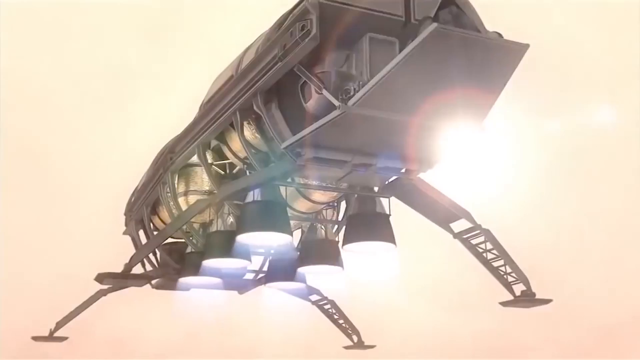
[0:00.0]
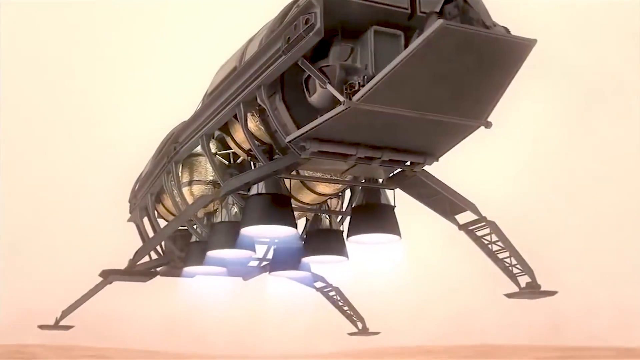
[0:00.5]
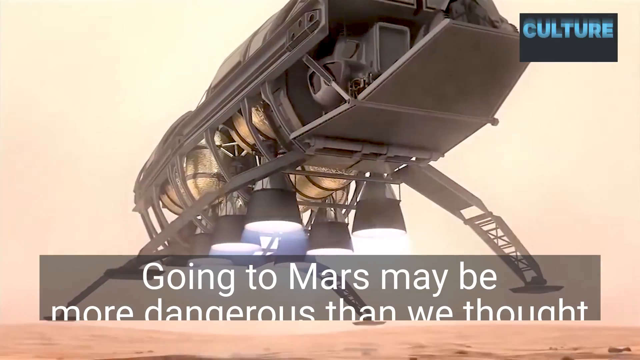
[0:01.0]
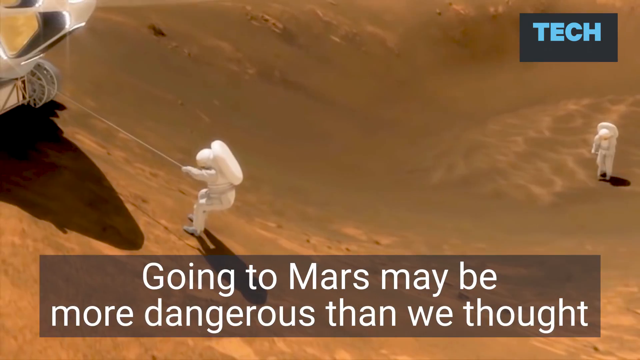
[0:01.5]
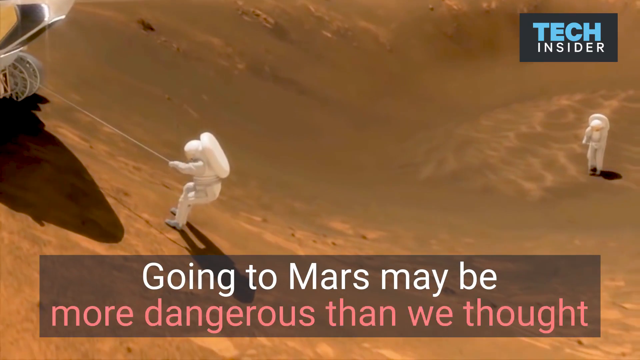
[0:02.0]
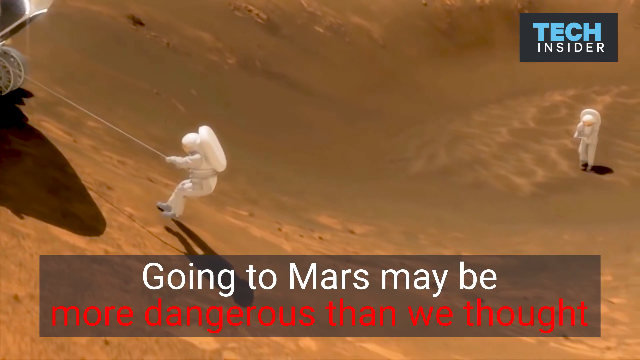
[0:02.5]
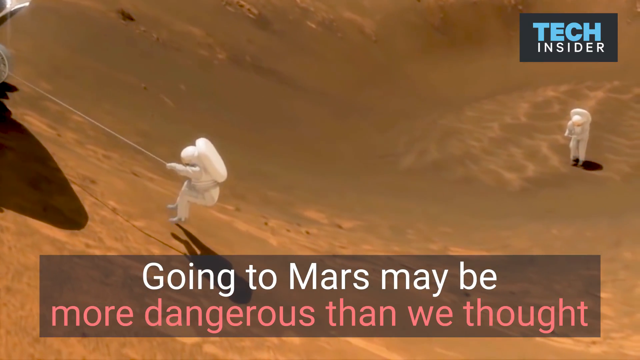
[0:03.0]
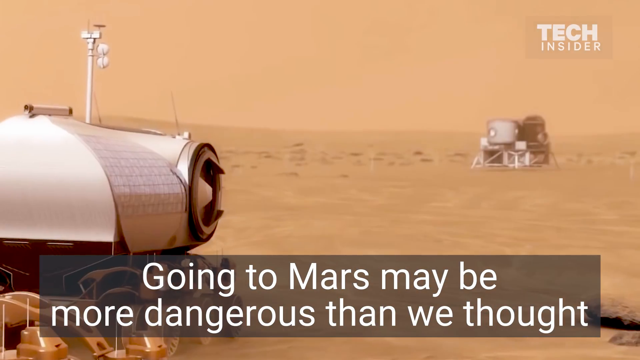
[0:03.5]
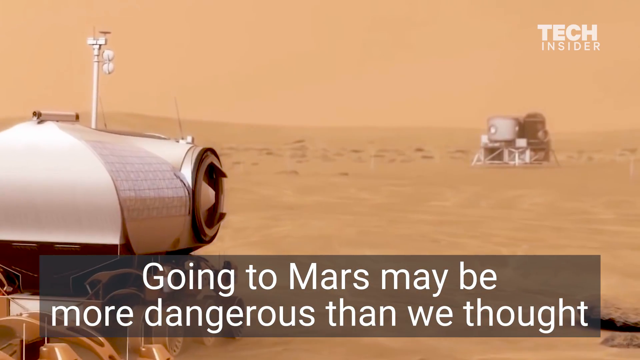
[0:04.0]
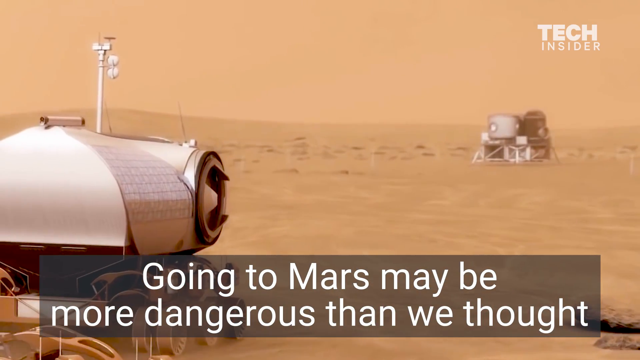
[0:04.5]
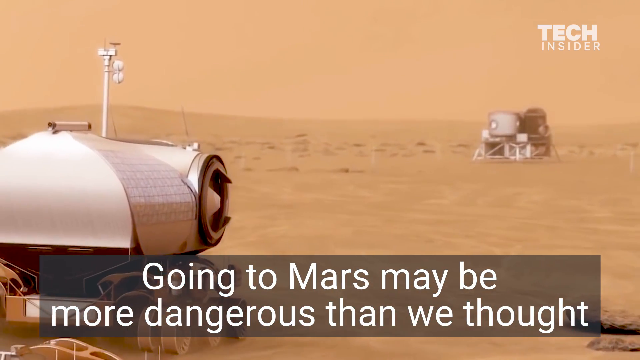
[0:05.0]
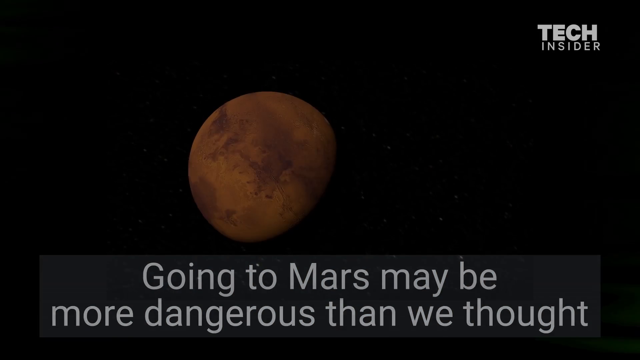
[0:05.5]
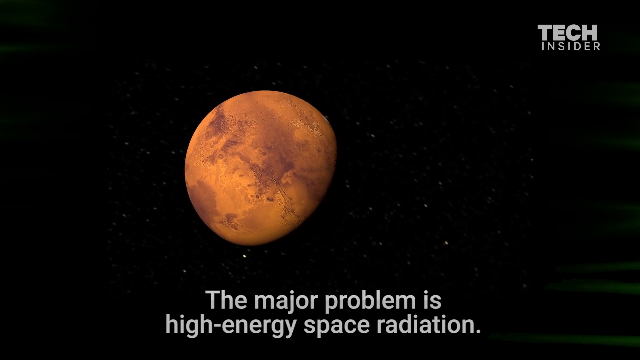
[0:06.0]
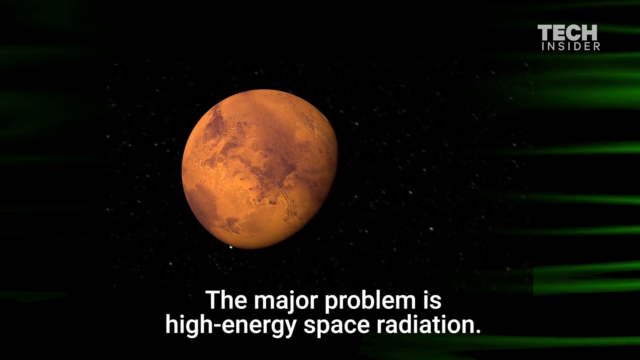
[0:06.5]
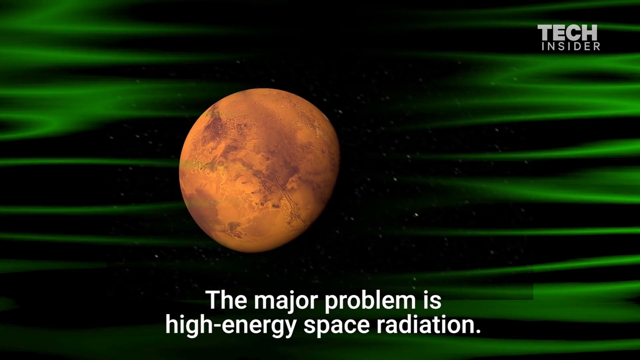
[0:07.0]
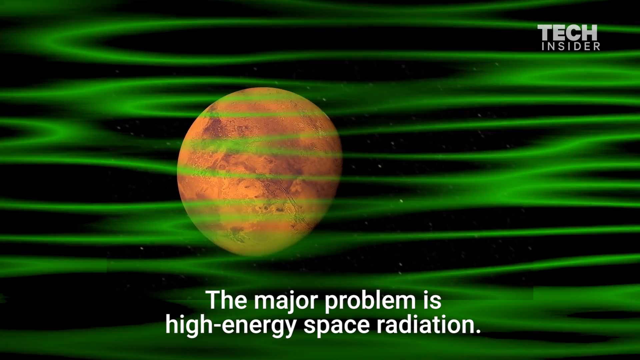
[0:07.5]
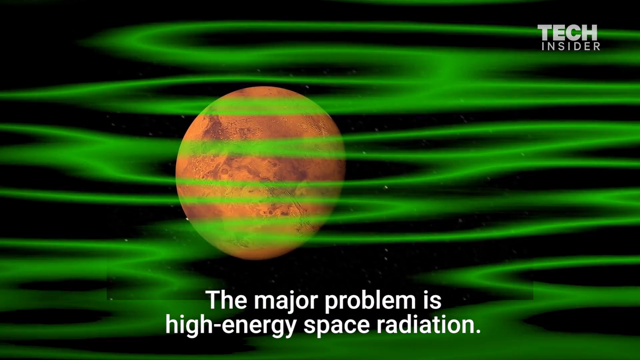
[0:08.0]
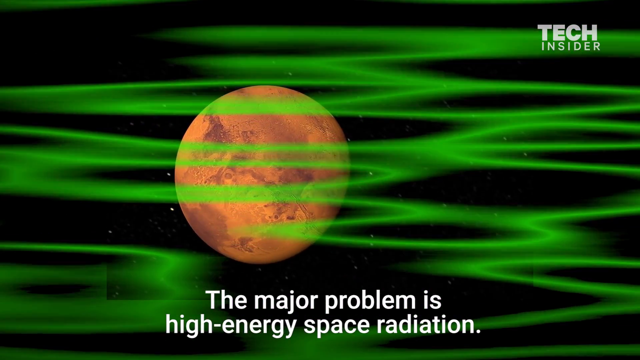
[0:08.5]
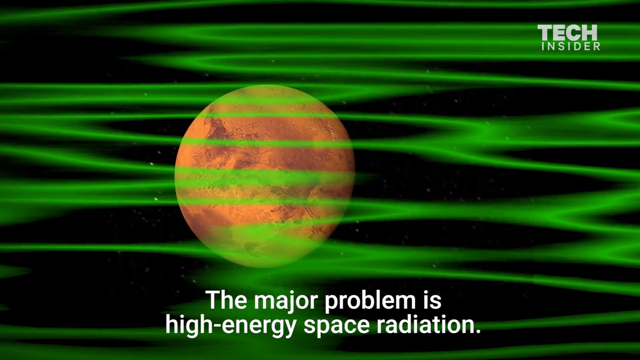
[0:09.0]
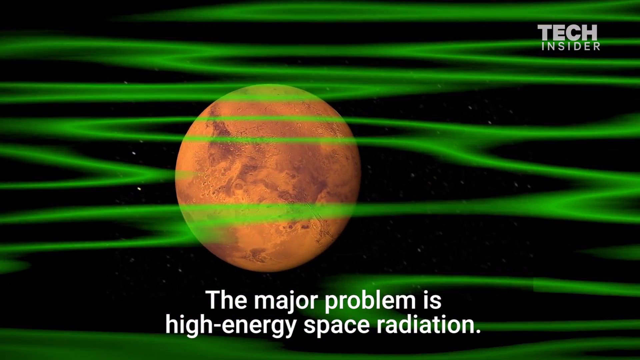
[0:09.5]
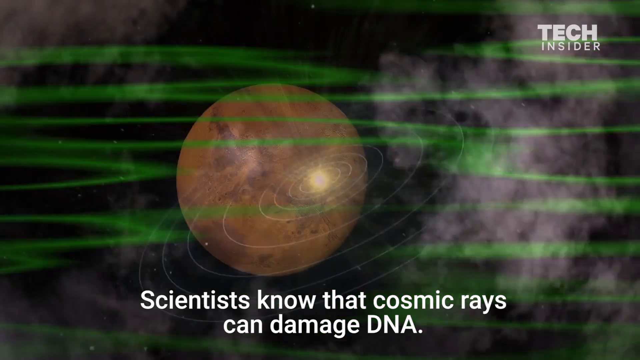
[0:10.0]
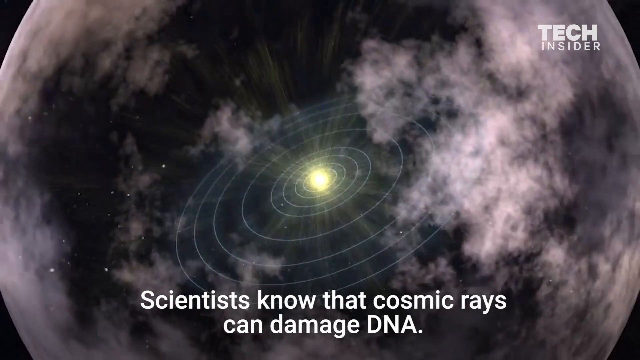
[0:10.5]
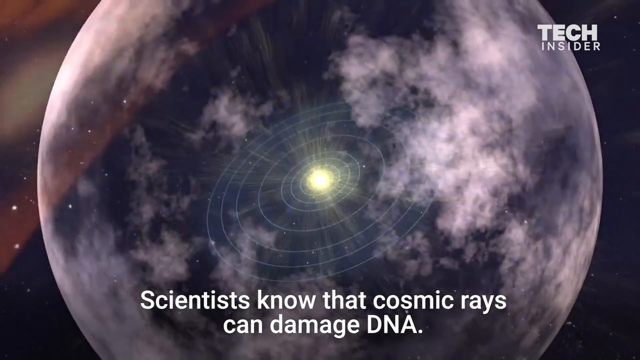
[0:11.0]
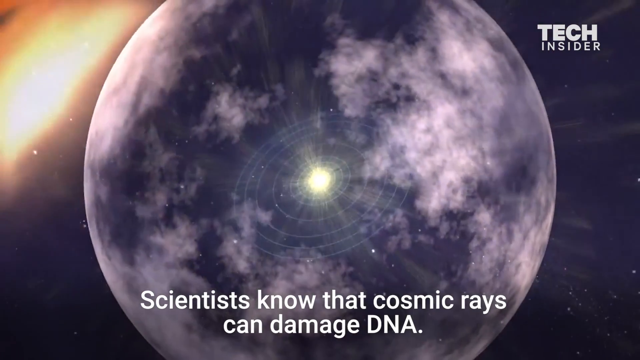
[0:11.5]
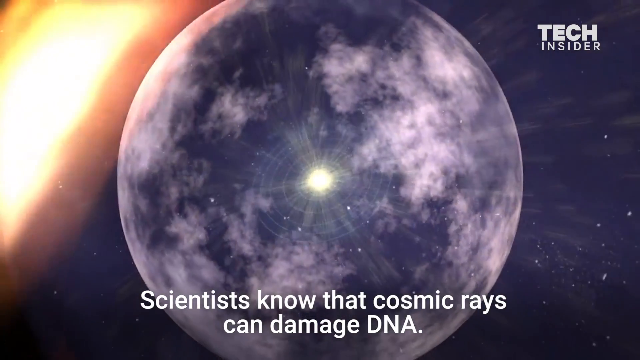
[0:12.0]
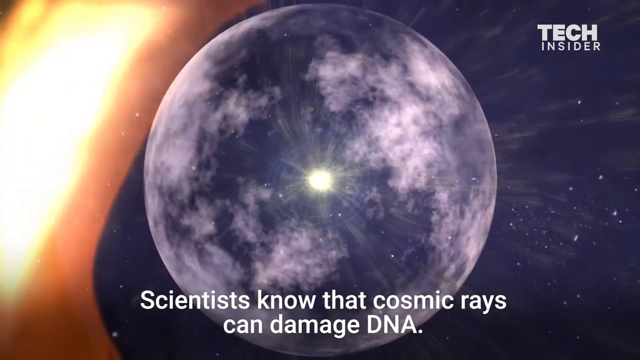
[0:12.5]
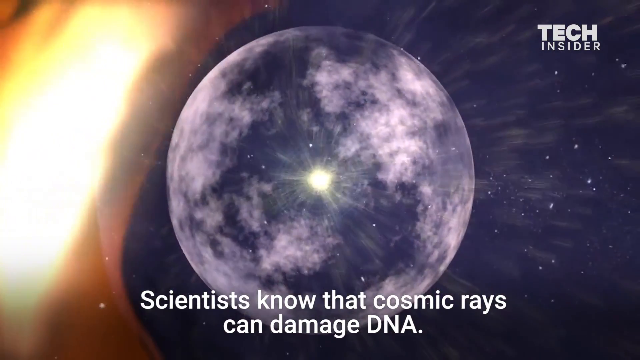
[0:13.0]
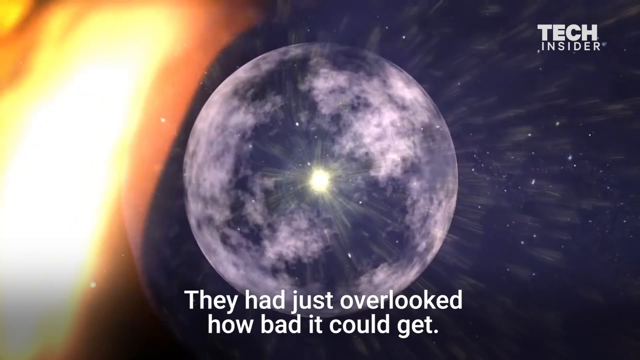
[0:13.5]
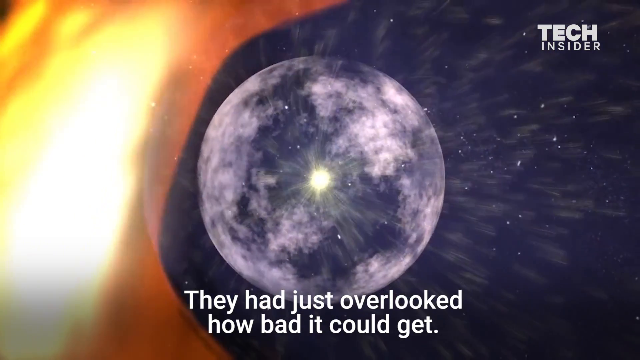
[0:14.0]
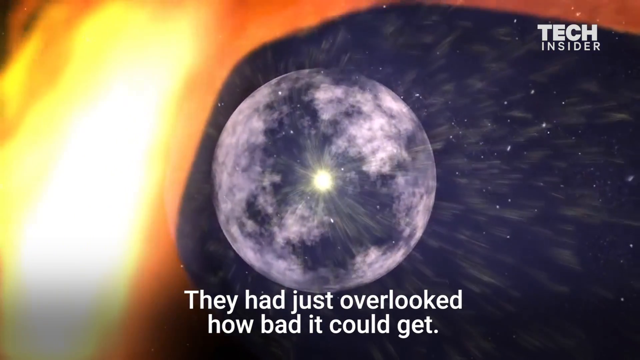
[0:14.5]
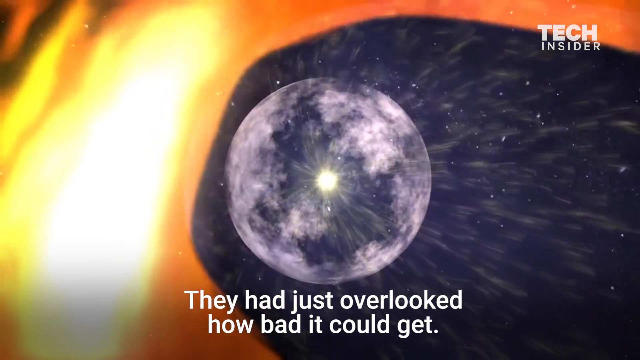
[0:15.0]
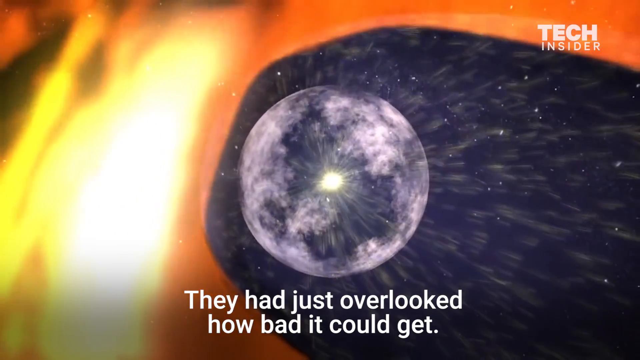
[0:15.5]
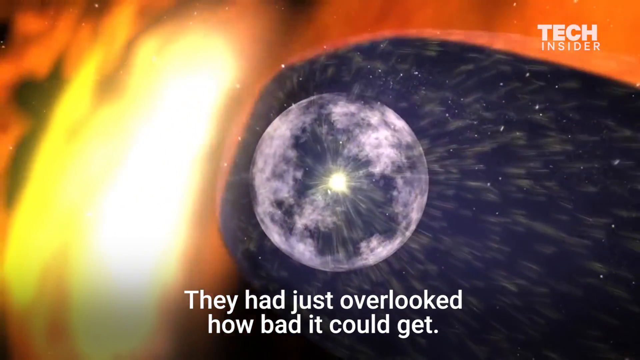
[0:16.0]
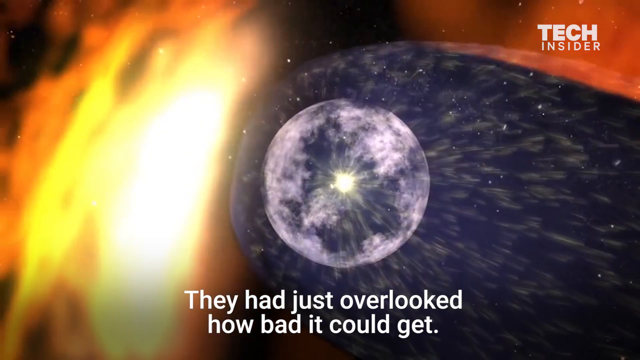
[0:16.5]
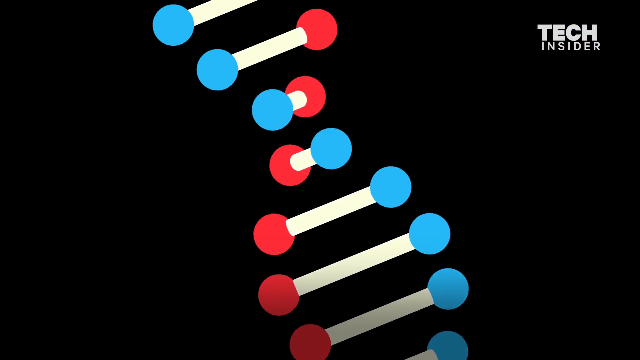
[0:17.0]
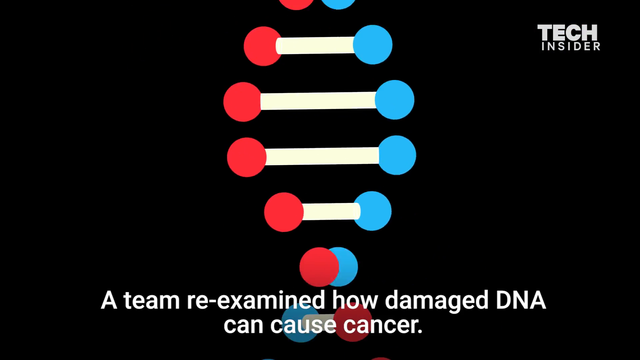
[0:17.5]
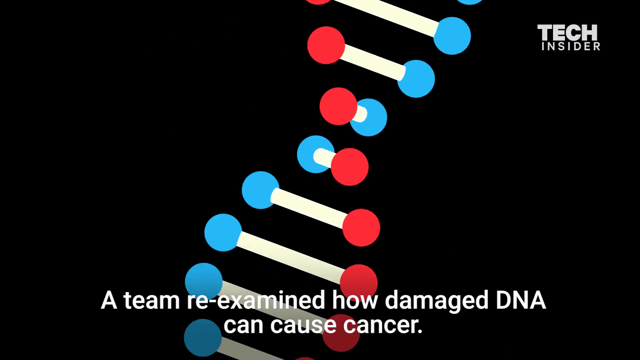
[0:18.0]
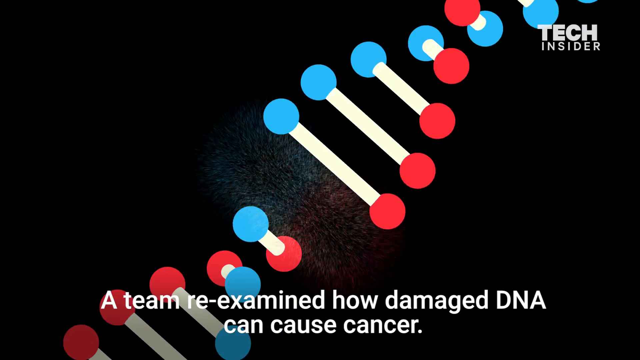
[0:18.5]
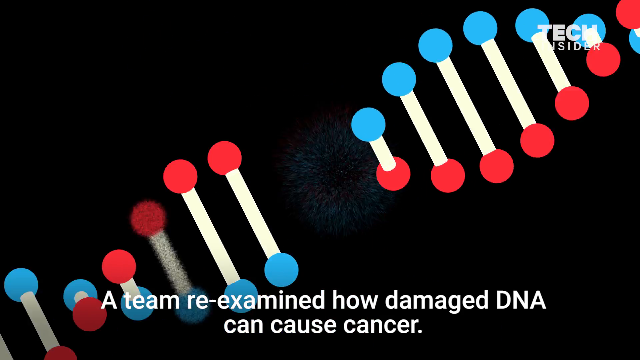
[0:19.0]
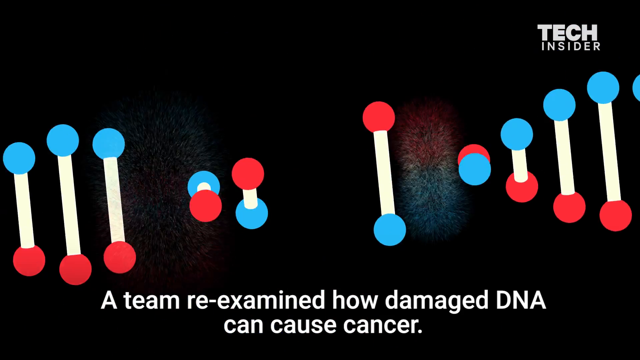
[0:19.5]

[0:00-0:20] CGI shots show rovers on Mars and an external view of the planet. One shot shows a lander, another a man sort of rappelling down the side of a slope, and another some small stations on the surface. Green, sort of glowing visualizations of radiation appear, followed by a sphere or planet with something glowing over it, possibly a cellular depiction of radiation enveloping cells.